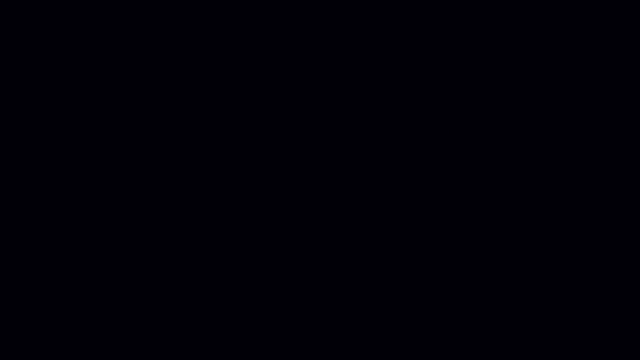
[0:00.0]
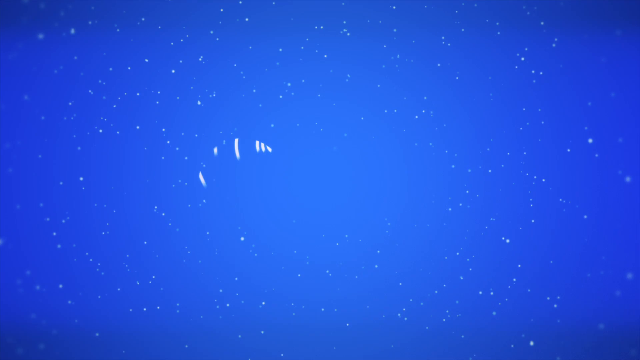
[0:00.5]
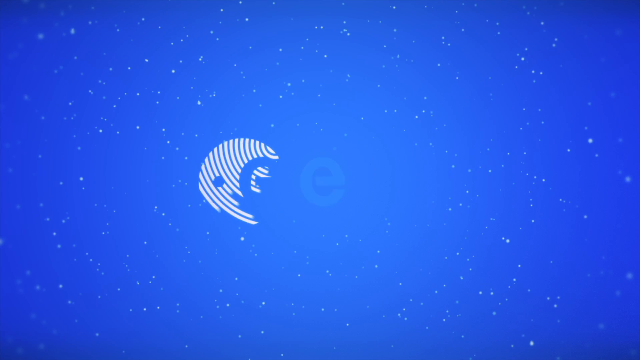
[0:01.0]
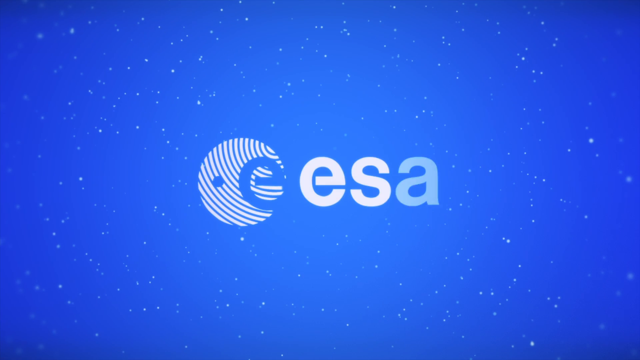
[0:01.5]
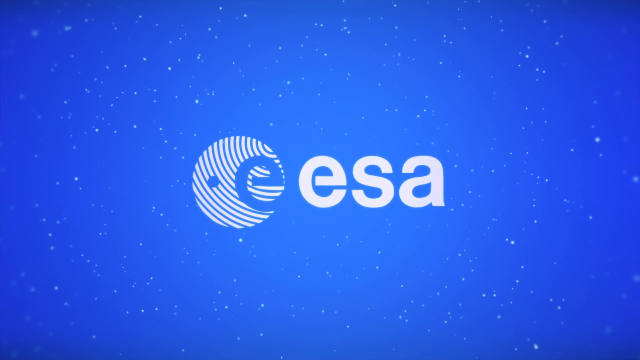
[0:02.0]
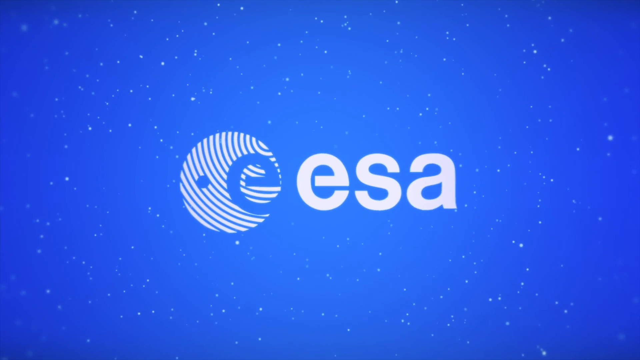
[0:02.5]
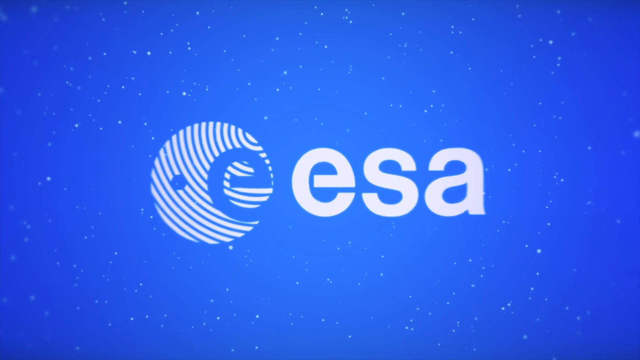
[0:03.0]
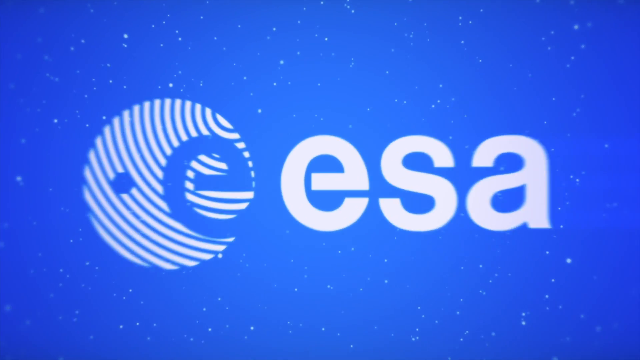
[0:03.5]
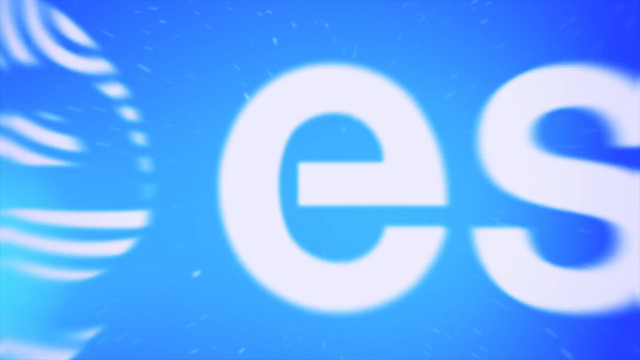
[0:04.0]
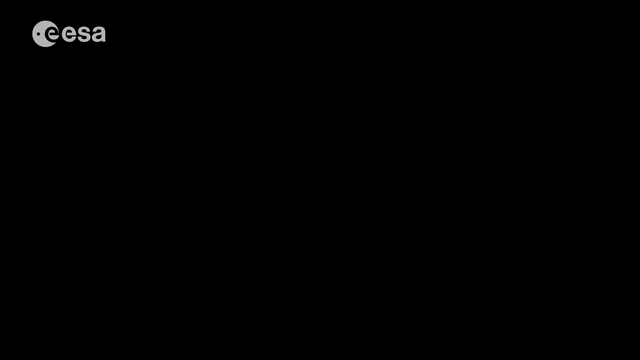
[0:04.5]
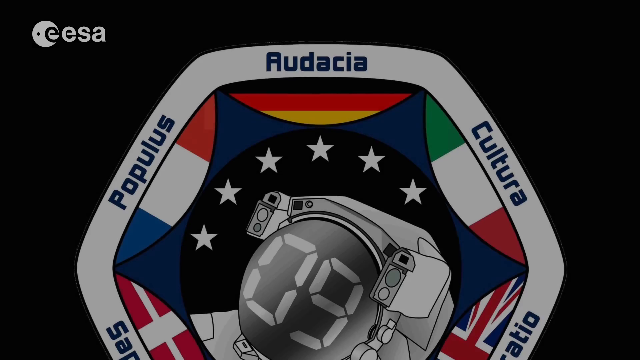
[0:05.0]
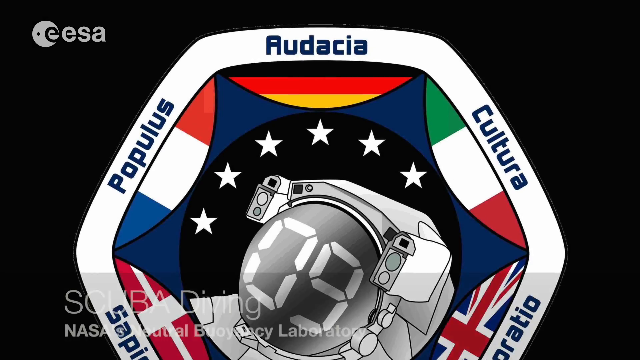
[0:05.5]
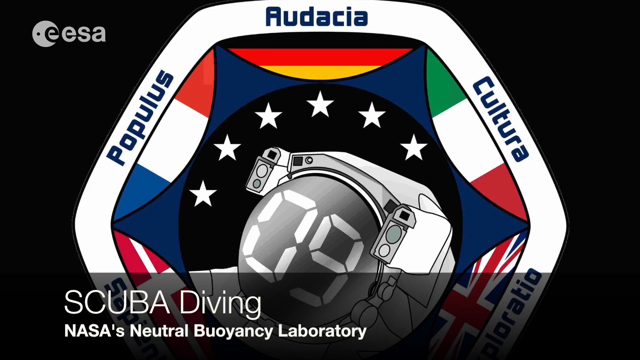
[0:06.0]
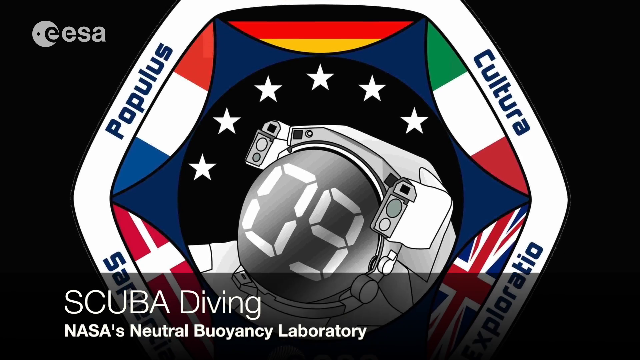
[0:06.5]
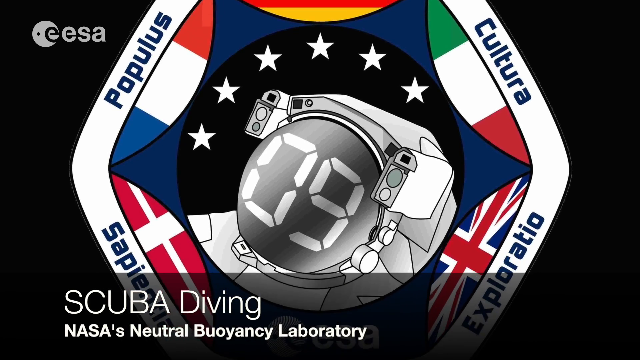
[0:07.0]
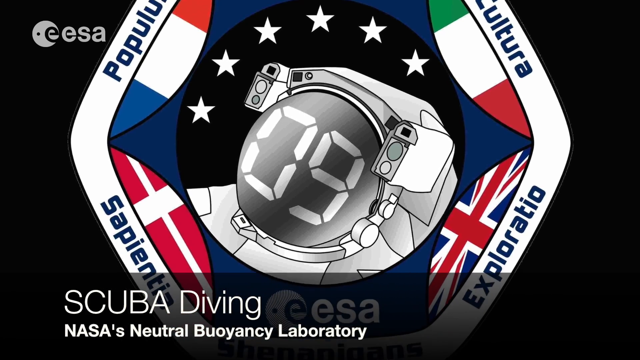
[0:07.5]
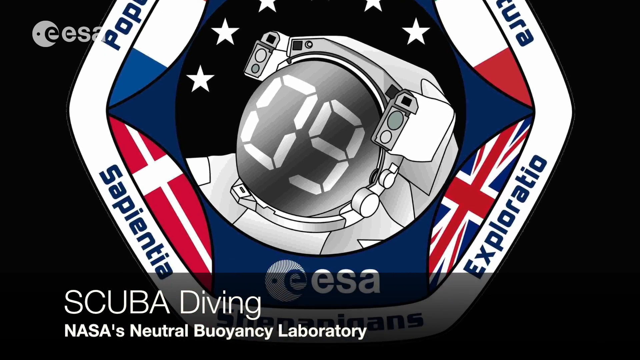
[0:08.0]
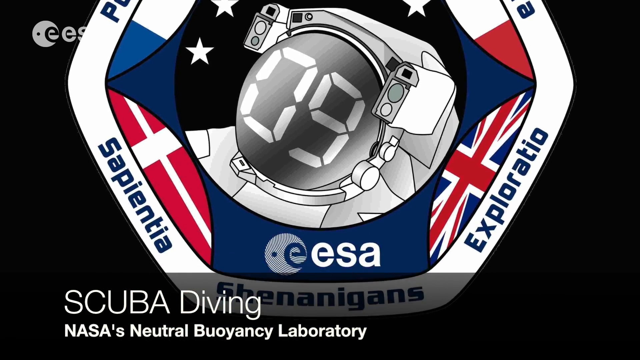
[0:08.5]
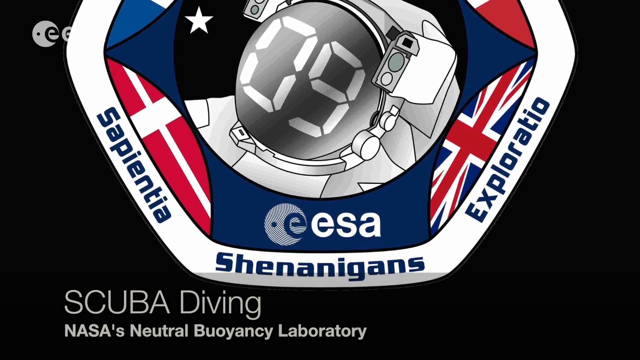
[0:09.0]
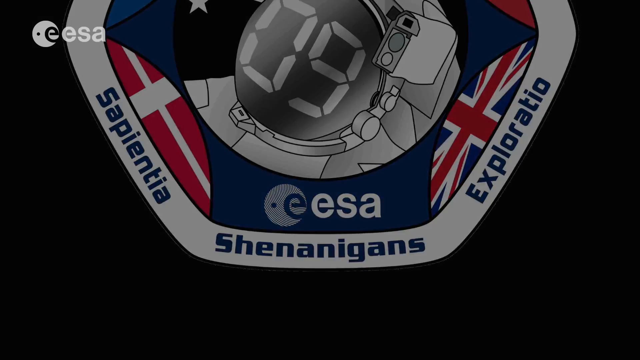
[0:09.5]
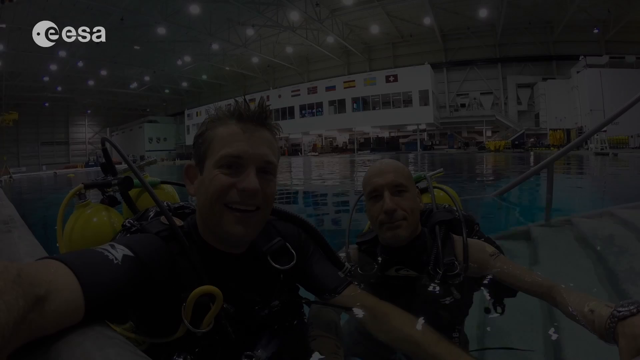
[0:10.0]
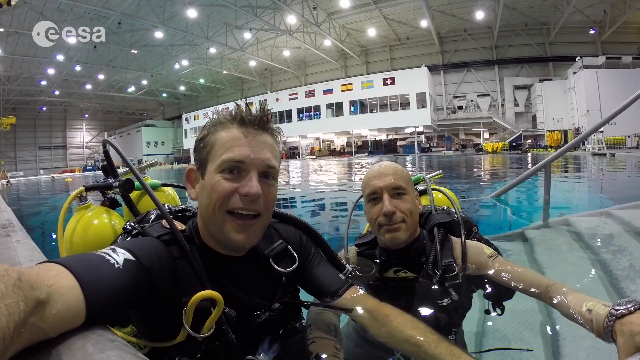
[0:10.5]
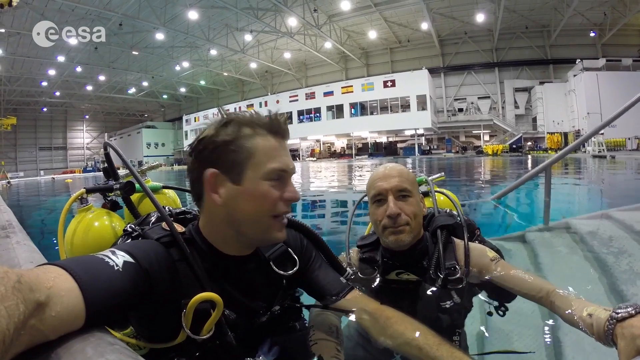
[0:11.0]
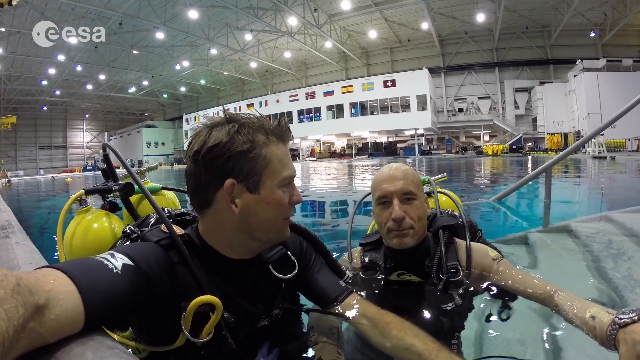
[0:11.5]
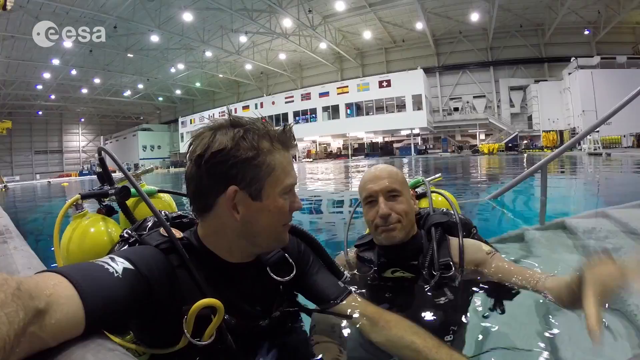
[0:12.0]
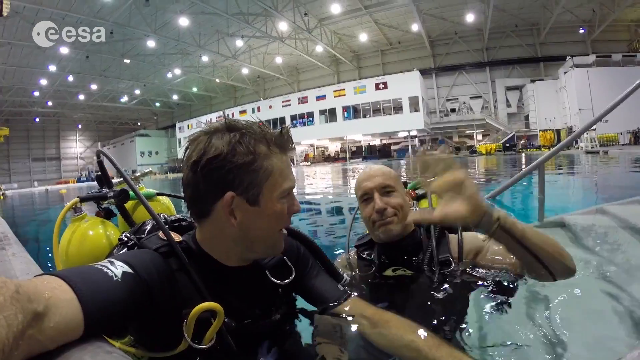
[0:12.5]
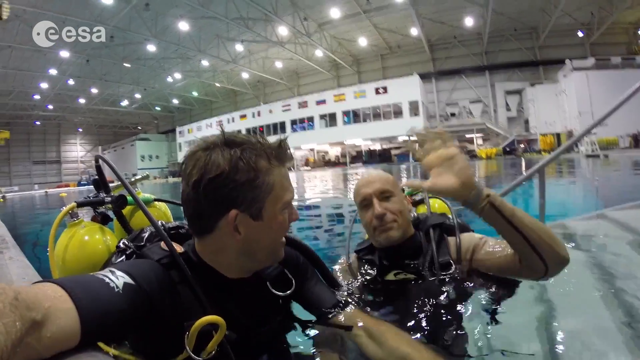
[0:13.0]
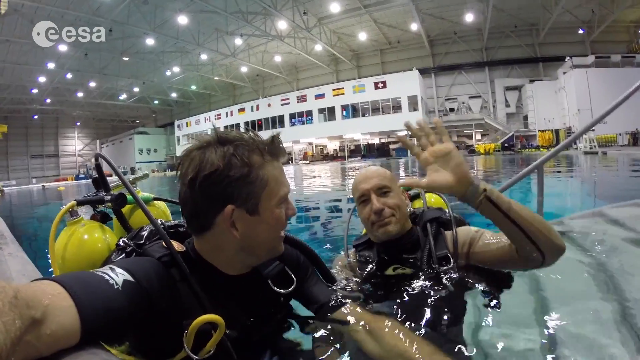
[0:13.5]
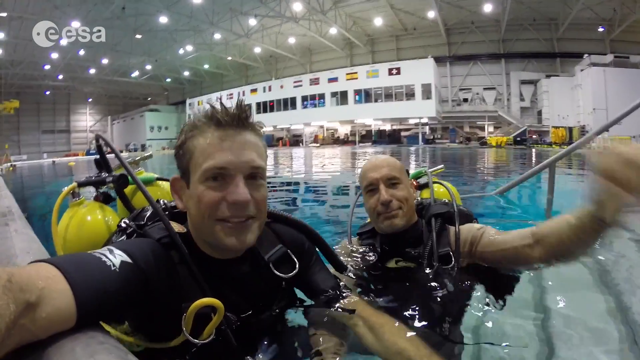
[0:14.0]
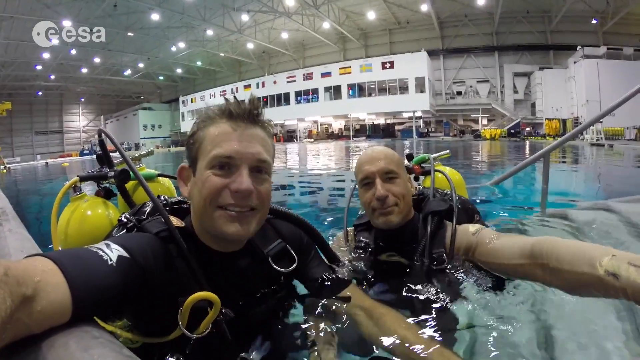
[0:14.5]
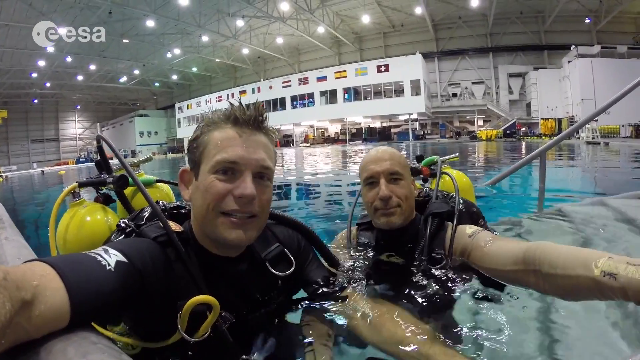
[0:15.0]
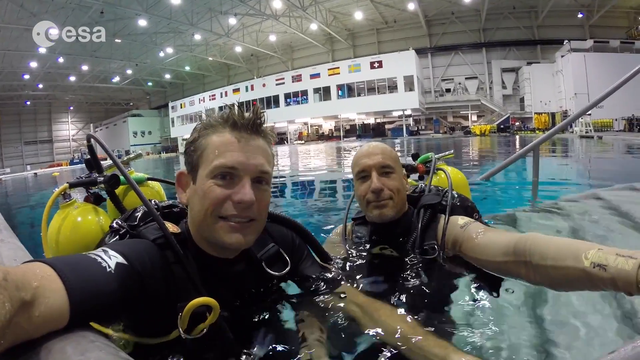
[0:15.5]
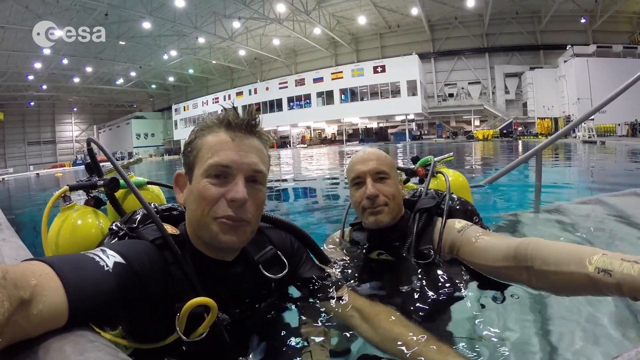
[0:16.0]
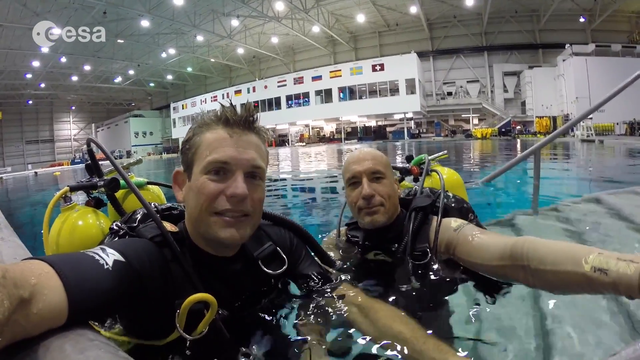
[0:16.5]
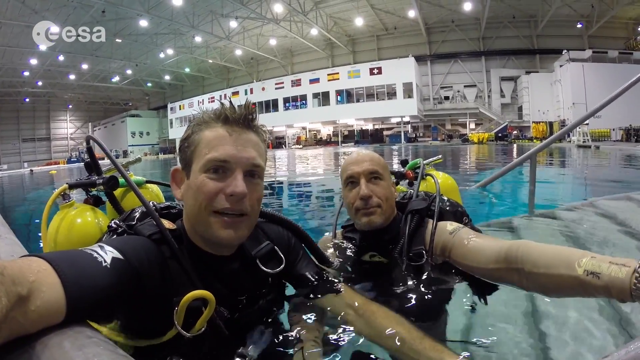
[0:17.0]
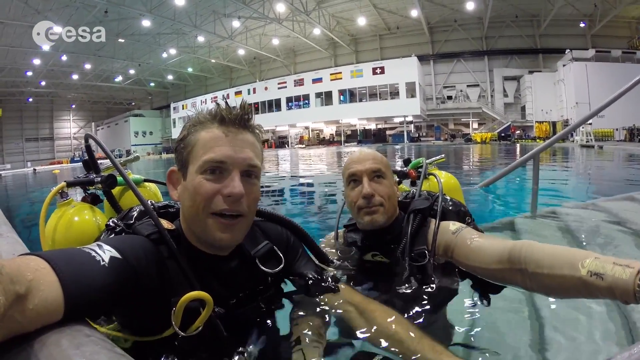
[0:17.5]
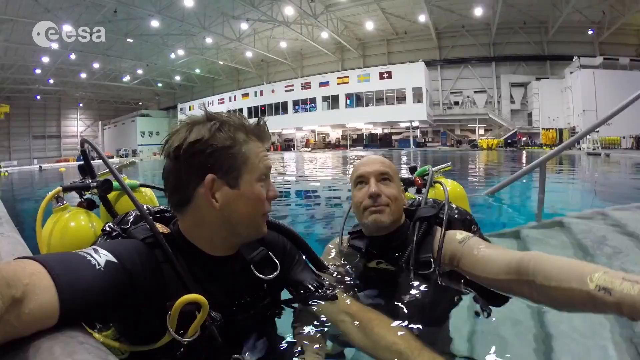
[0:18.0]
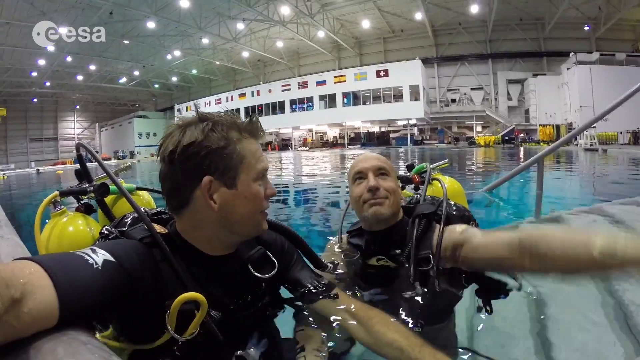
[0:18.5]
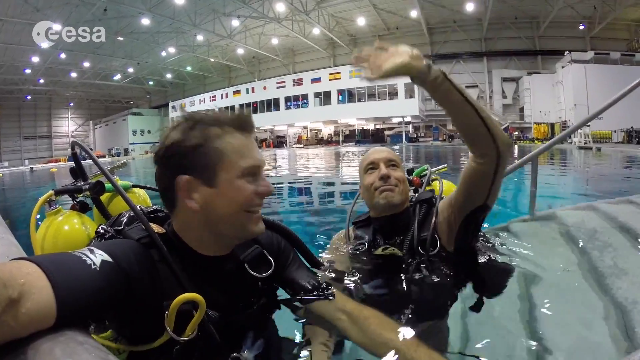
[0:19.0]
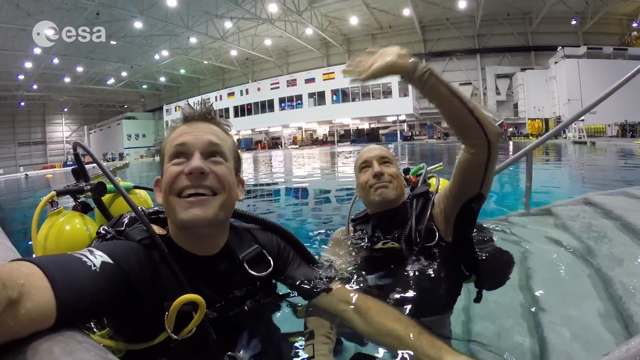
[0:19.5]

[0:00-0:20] The video opens with a logo: the letters "EESA" in white on a blue background. Next comes a flag-like graphic that appears to be a logo for EESA, with words that look almost like different languages. At the top it says "Audacia"; to the left of that is "Populus" and to the right "Cultura"; there is also "Exploratio", with "SAPIENTIA" to its left, "Shenanigans" at the bottom, and "EESA". Text reads "scuba diving NASA's neutral buoyancy laboratory". The view then pans to two men in a large indoor pool with scuba tanks on their backs. One holds the camera and talks, while the other waves to somebody off camera. A set of stairs leads down into the pool next to them.